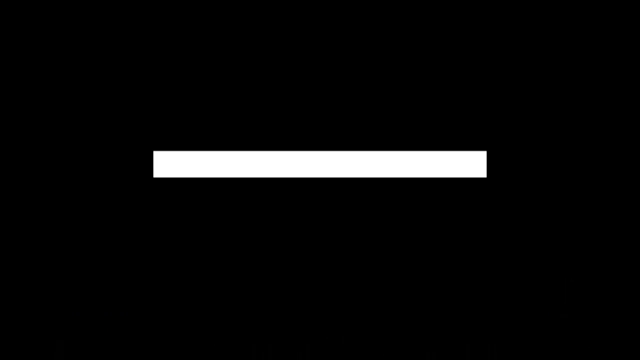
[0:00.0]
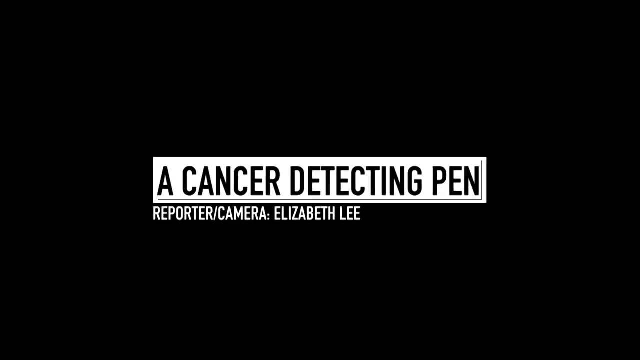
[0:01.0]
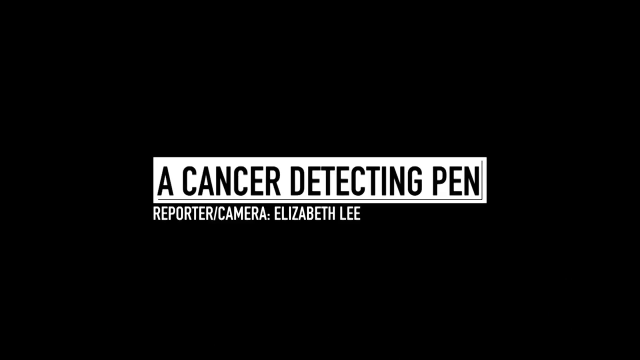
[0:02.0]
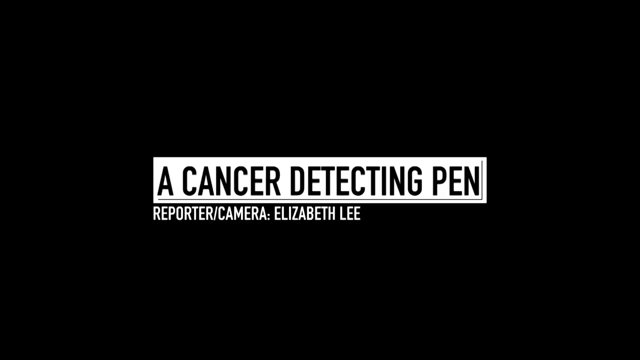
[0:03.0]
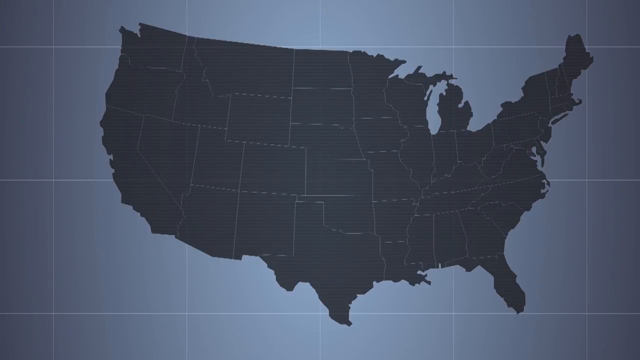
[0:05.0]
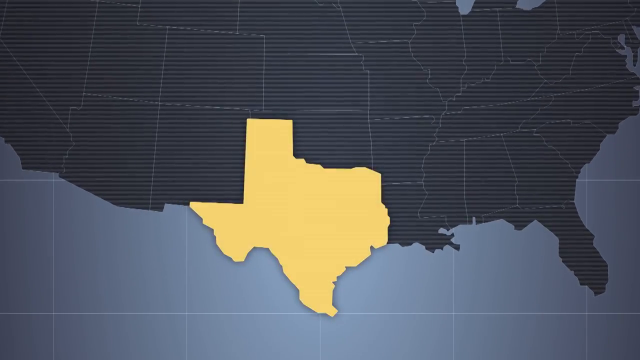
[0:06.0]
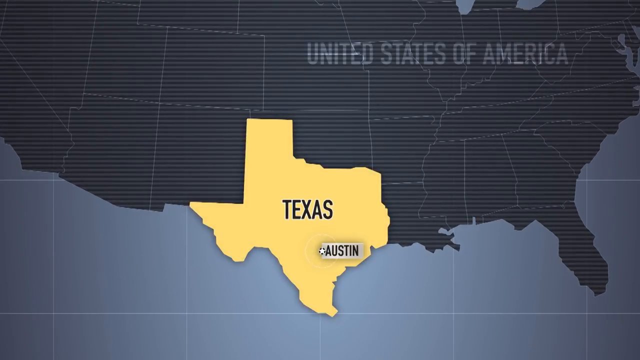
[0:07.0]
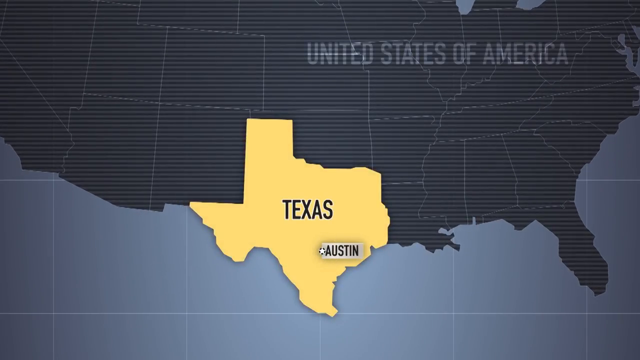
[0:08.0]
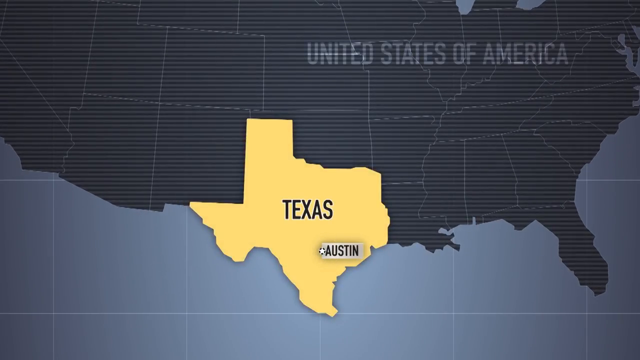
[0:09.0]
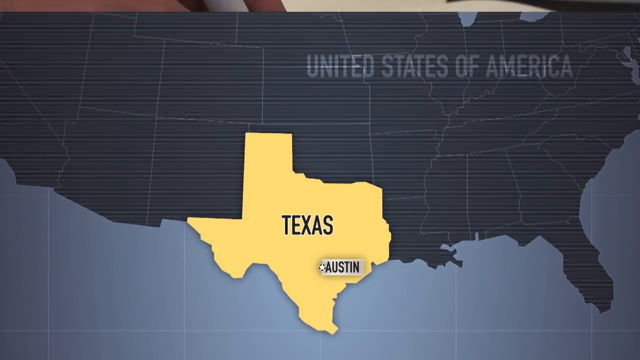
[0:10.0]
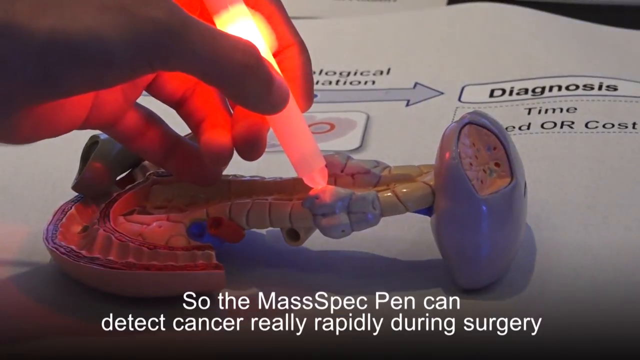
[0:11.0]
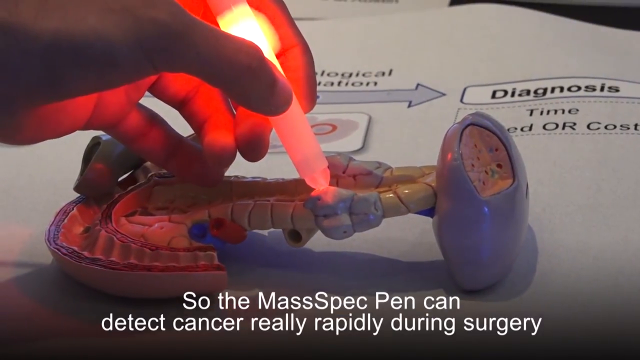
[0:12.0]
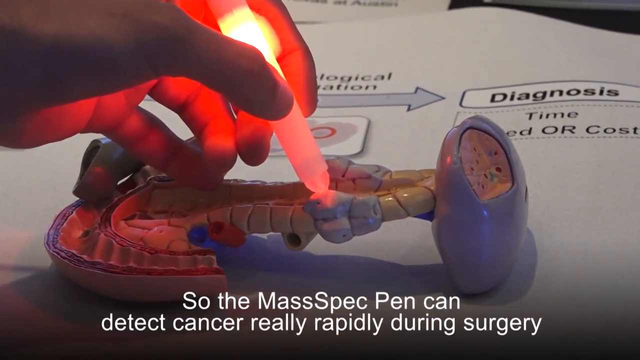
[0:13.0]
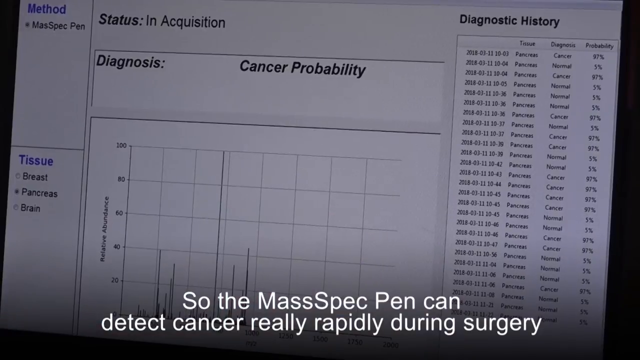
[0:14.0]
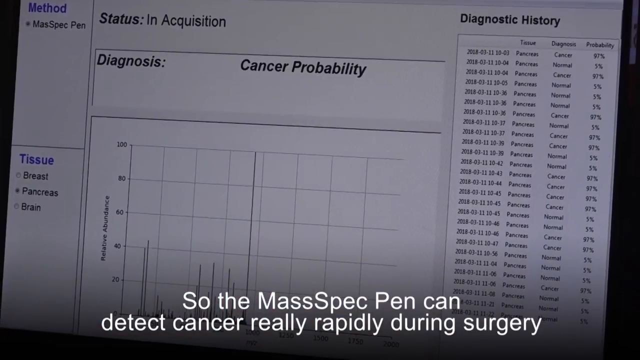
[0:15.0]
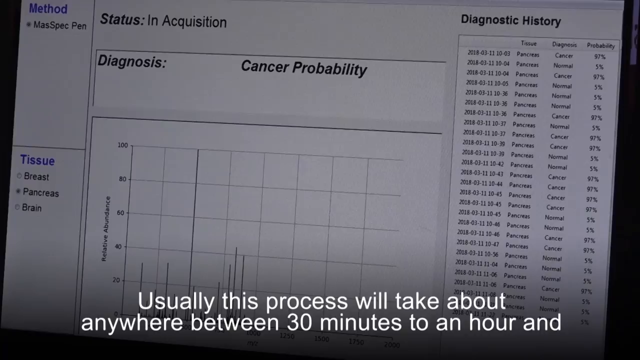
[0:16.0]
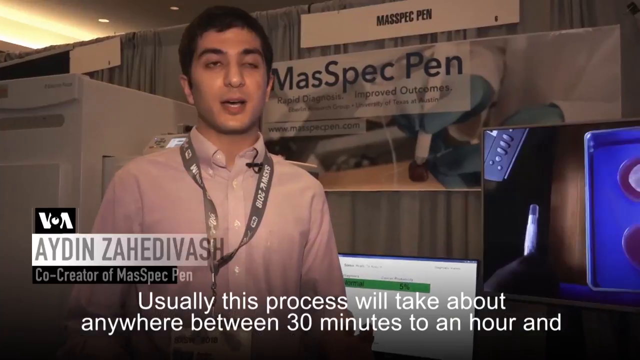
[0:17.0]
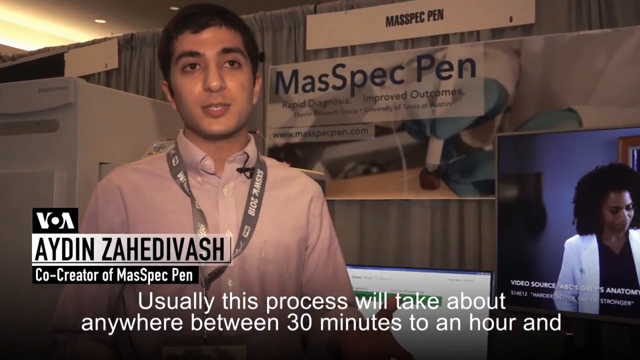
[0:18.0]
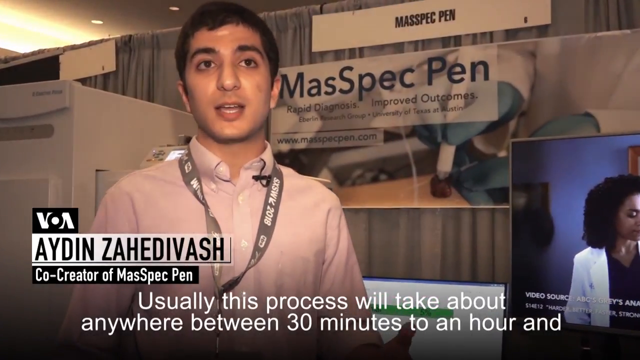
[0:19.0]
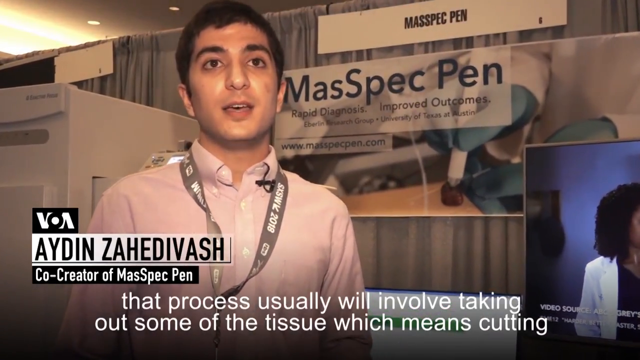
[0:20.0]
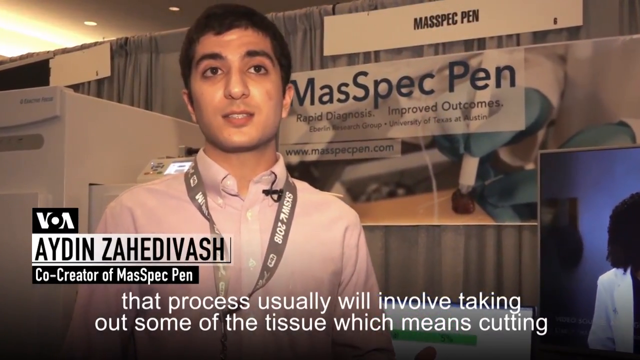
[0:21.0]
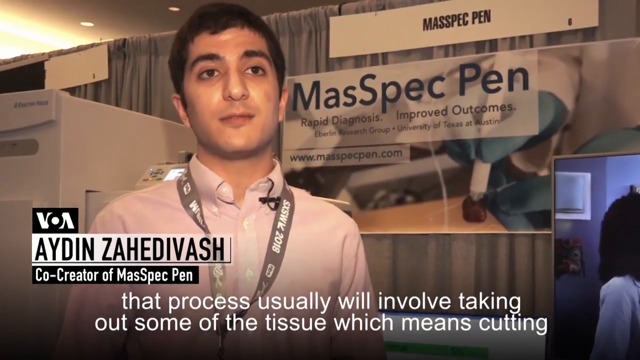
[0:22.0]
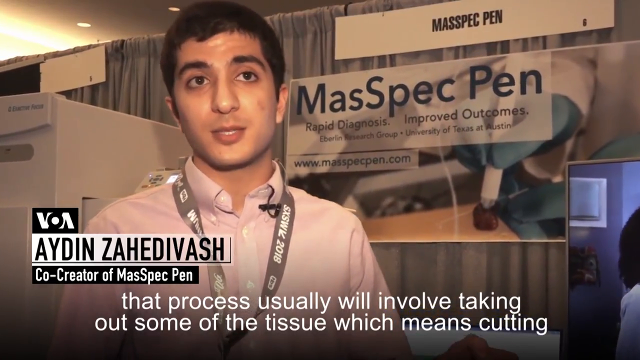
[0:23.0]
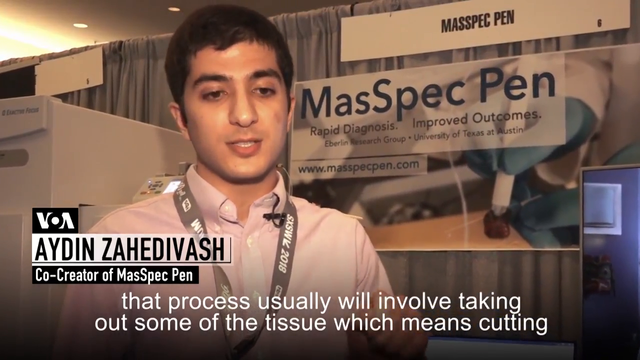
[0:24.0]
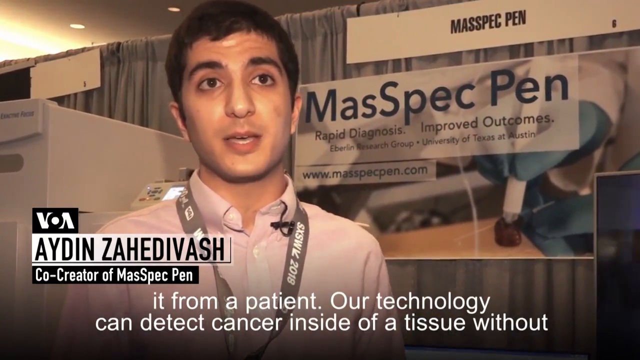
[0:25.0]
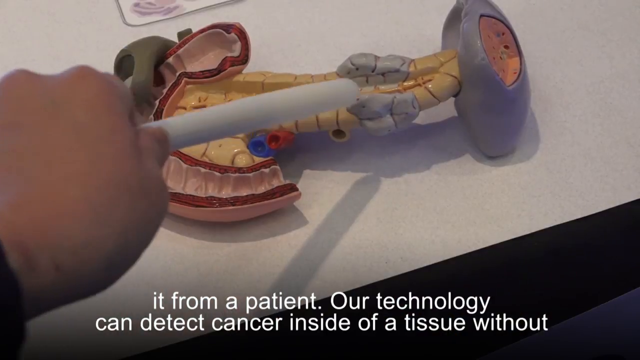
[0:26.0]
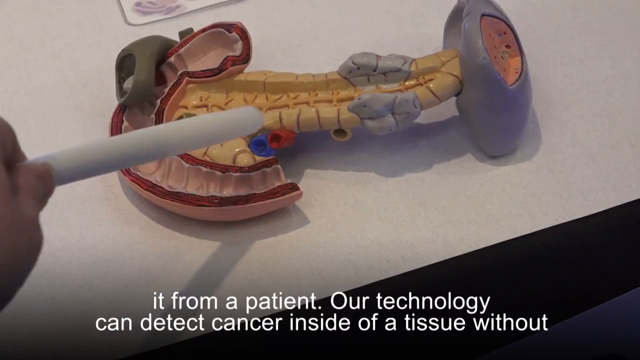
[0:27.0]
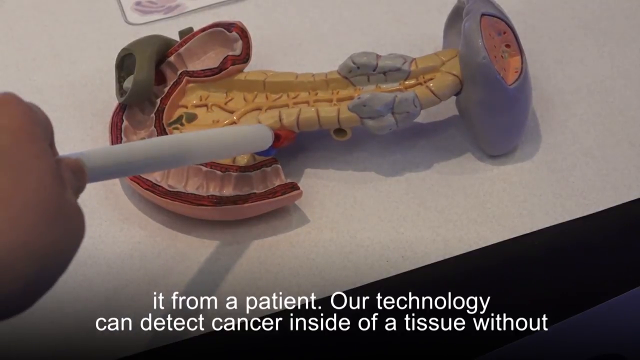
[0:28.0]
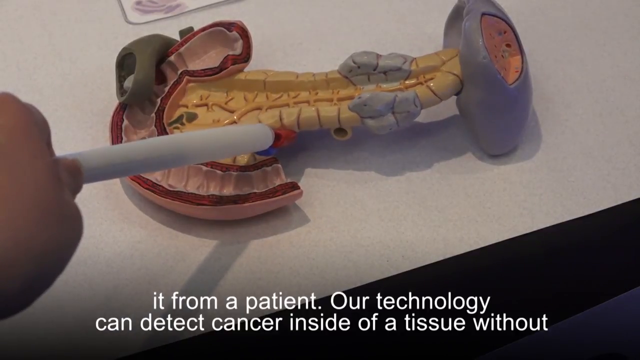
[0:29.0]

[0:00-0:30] A black background shows a white box in the center with black text reading "a cancer-detecting pen," with a grey outline below it. The line below that, in white text, reads "reporter/camera, Elizabeth Lee." Next, a gray background shows a gray outline of the United States of America with the state of Texas lit up in yellow. Gray text in the center reads "Texas," and white text at the top reads "United States of America." More text appears at the bottom right reading "Austin," with a white star beside it. In the next image, against a white background, a white person's hand on the left side holds a white pen that glows orange-like around the middle, creating an orange hue around the person's fingers. White text below reads "so the mass spec pen can detect cancer really rapidly during surgery." Next, a white background has black lettering: at the top right, "diagnosis" in a white square box, and below that in black text, "time or cost." There is a clay piece, gray at the front and rounded, with off-white tubing, and the pen is pressing right against one of the rounded pieces. The next screen has an off-white background. At the top right, black text reads "Diagnostic History," with four lines running down containing dates, wording and percentages in small text. At the top left, blue lettering reads "Method," with black wording below reading "MasSpec Pen." In the next box down, blue lettering says "Tissue," and below it black text reads "Breast, Pancreas, Brain," running downwards. The middle top reads "Status and Acquisition." The box below that, white with black lettering, reads "Diagnosis," and to its right it says "Cancer Probability." Just below is a chart in gray, with numbers running downwards outside the squares reading "180, 60, 40, 20" and wording beside it reading "relative abundance"; the lines keep changing. The next screen shows a brown-skinned man with short brown hair in a pink-collared shirt, with a gray ribbon with white lettering around his neck. At the bottom left, white lettering on a black box says "V.A." A white box below it reads "Aydin Zahedivash," and the box below that, with white text on a black background, reads "co-creator of mass spec pen." White text below reads "usually this process will take about anywhere between 30 minutes to an hour." There is a gray curtain behind him with a white banner at the top reading "mass spec pen" in black text, and a banner below with black lettering on the left reading "mass spec pen," and underneath, "rapid diagnosis improved outcomes." Off to the right is a blue screen with a gray and black background and some small white lettering below that is hard to read. He is being interviewed by a camera person, and there is a white box behind him on his left side. The white text below changes to read "that process usually will take, will involve taking out some of the tissue, which means cutting."